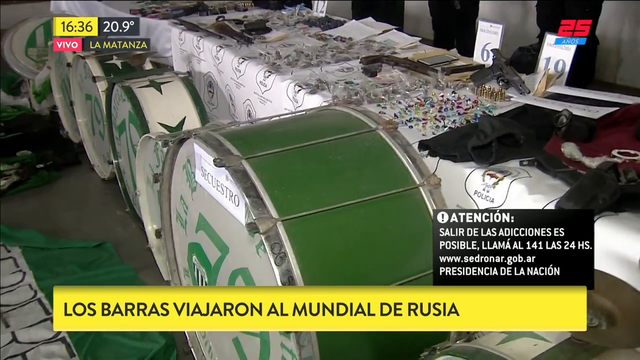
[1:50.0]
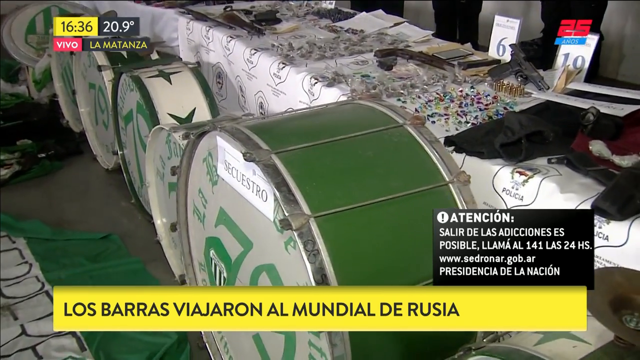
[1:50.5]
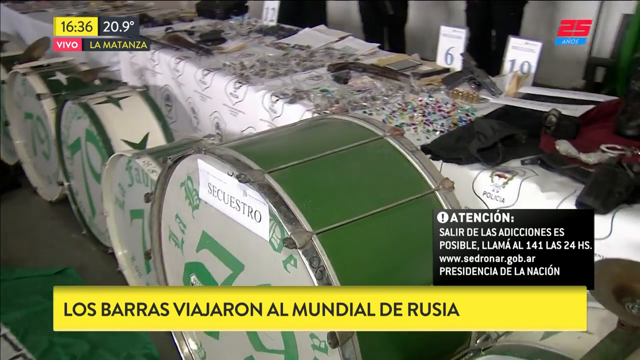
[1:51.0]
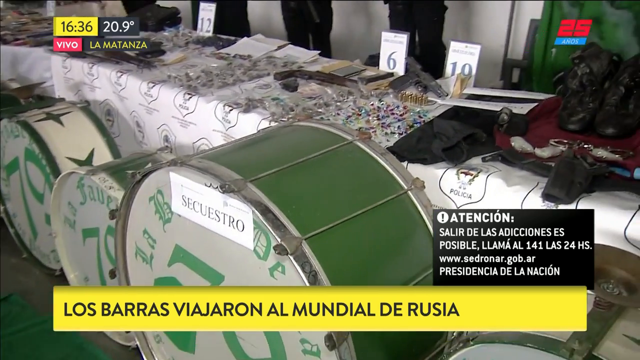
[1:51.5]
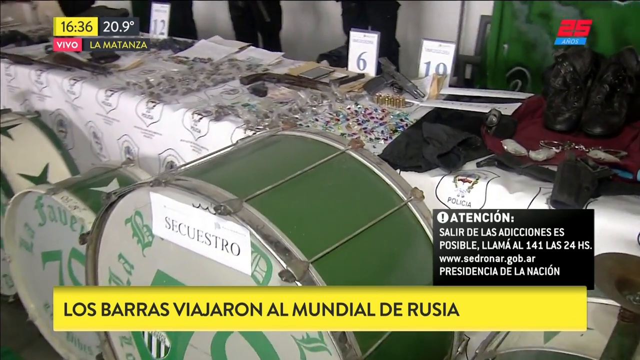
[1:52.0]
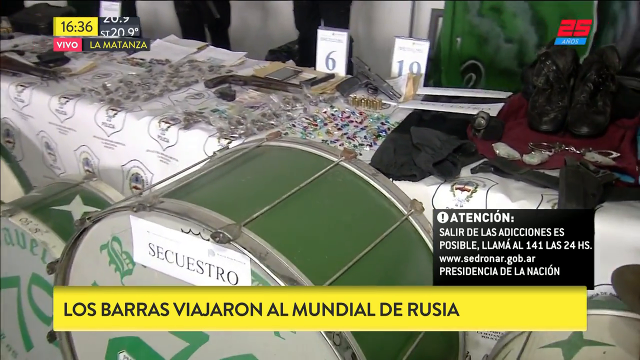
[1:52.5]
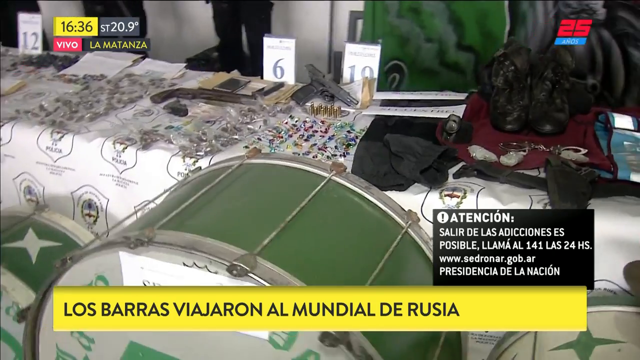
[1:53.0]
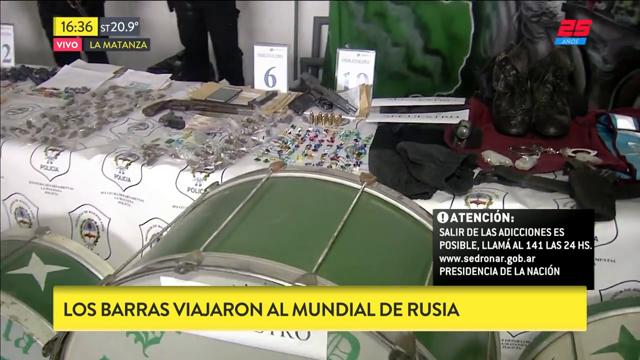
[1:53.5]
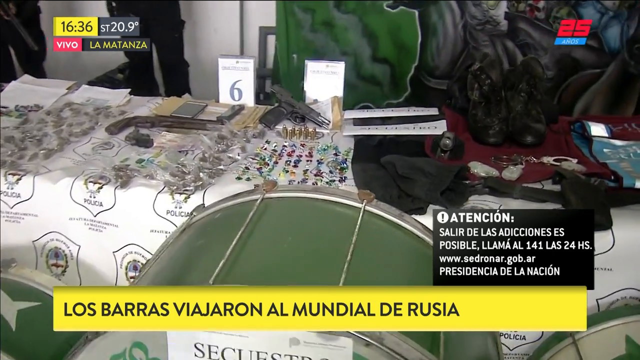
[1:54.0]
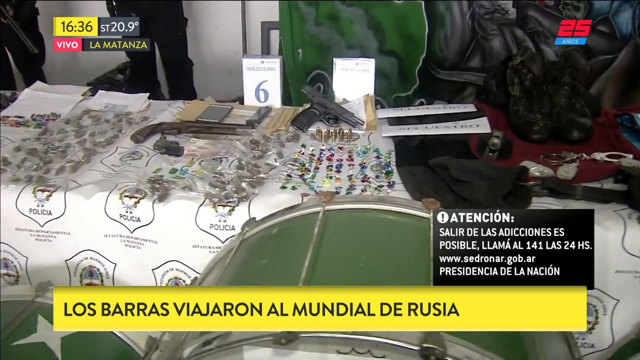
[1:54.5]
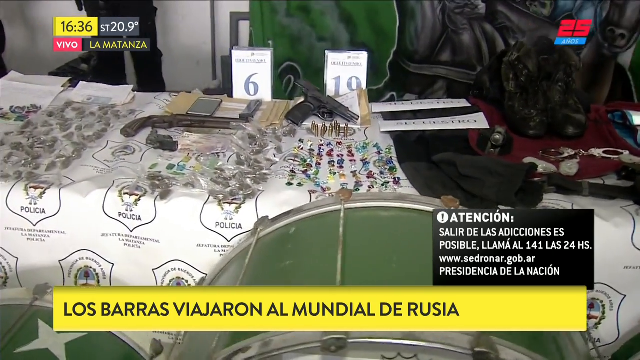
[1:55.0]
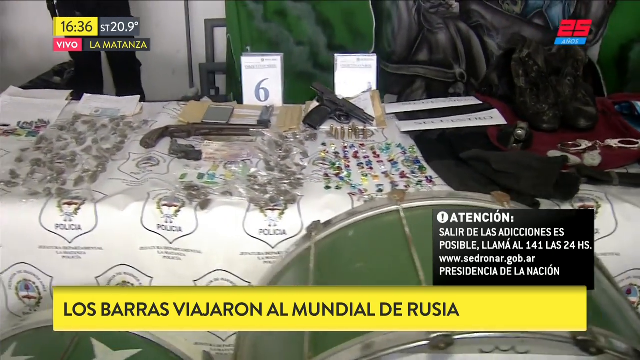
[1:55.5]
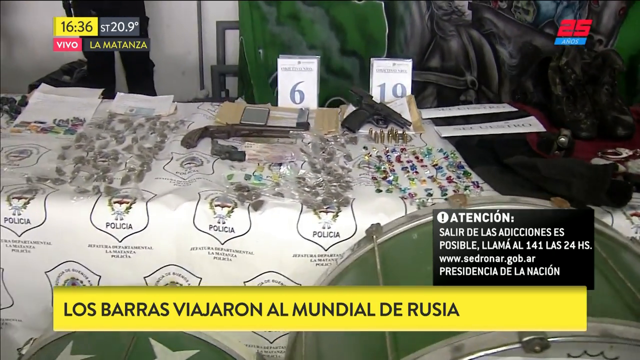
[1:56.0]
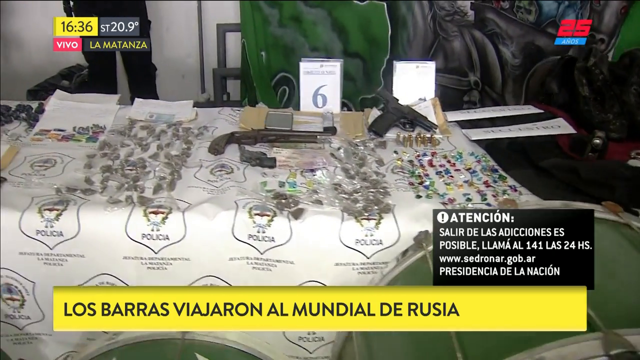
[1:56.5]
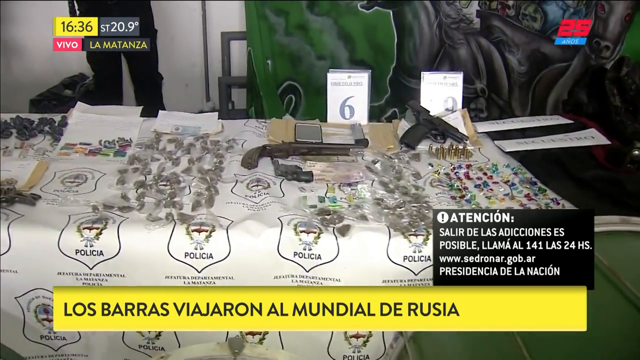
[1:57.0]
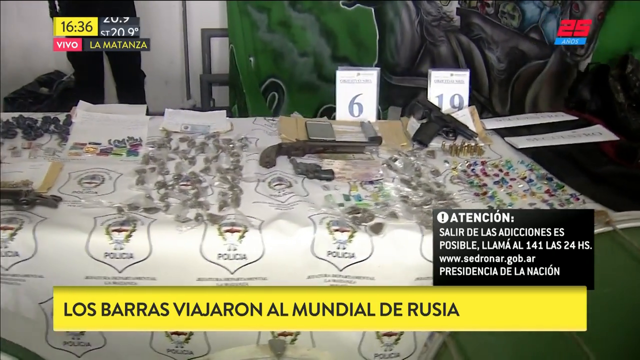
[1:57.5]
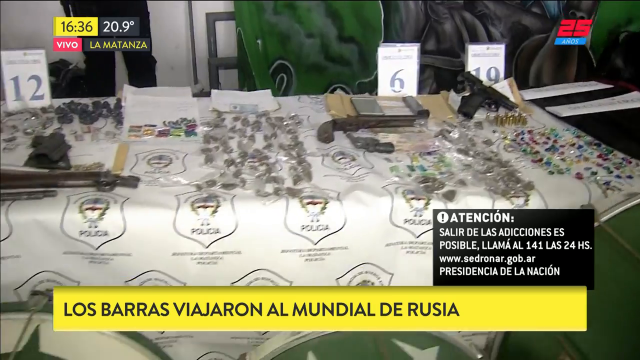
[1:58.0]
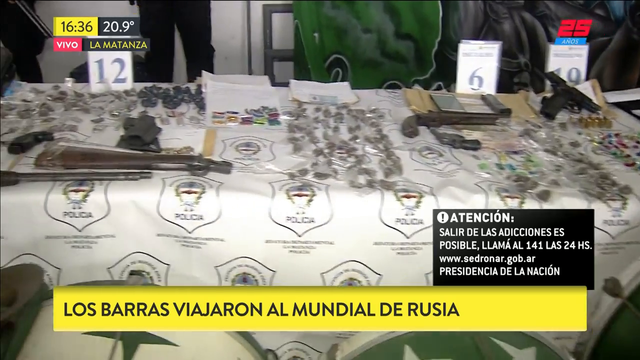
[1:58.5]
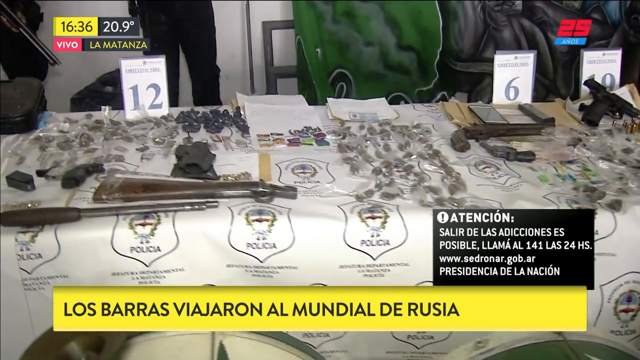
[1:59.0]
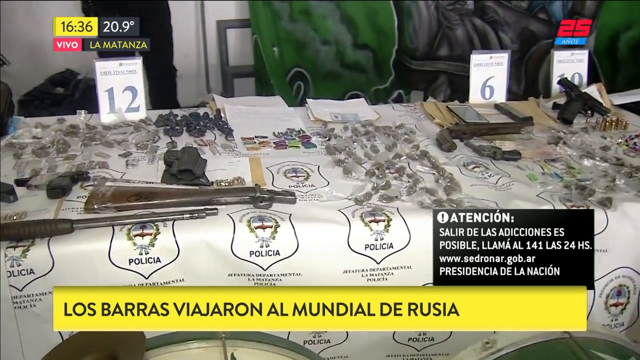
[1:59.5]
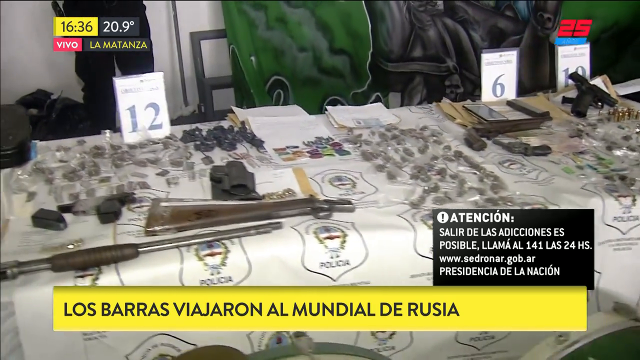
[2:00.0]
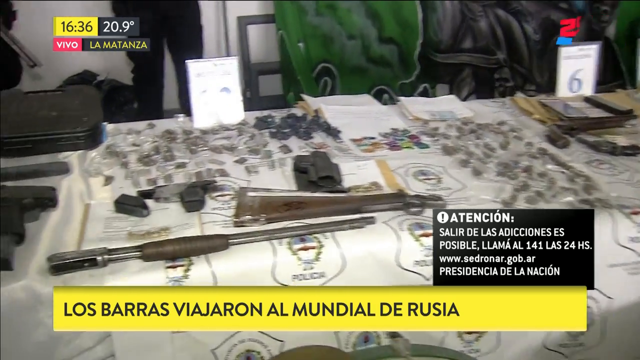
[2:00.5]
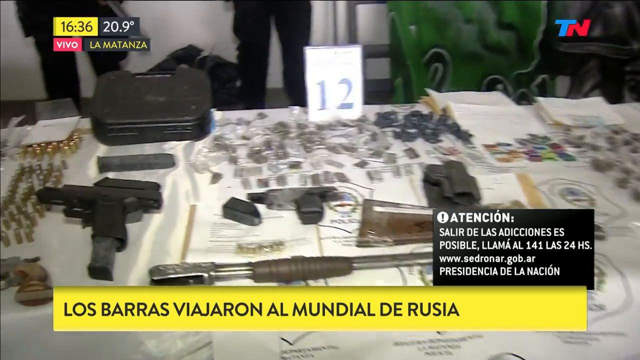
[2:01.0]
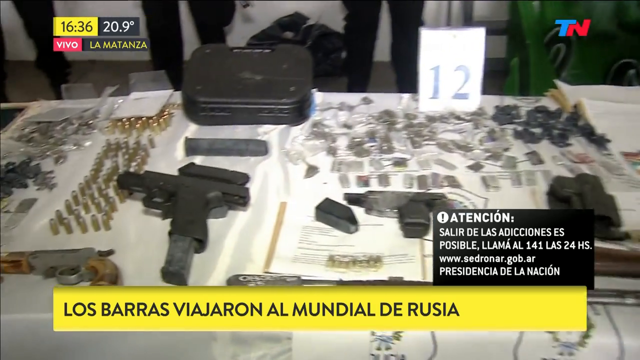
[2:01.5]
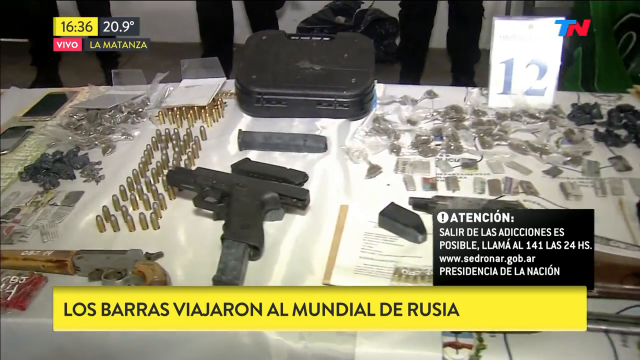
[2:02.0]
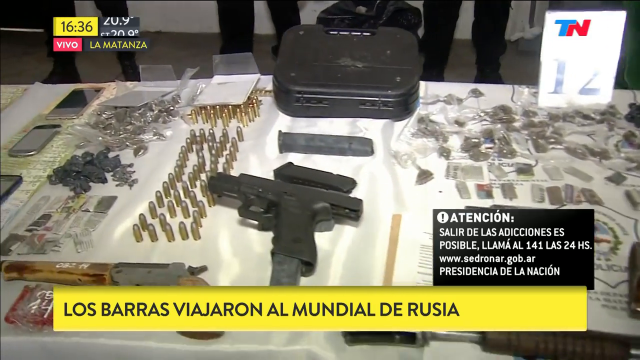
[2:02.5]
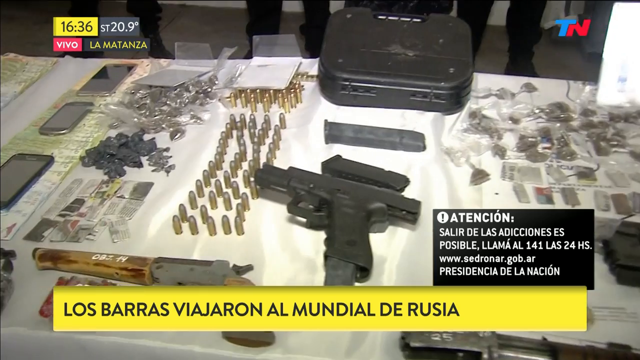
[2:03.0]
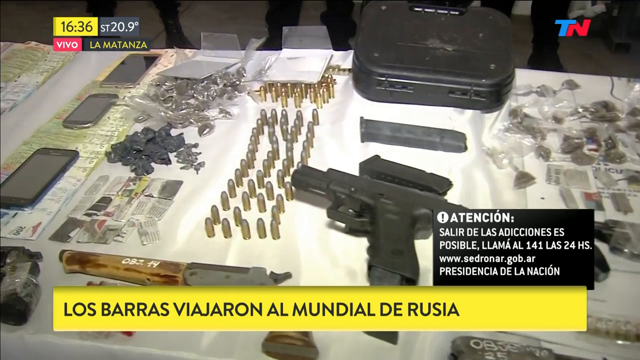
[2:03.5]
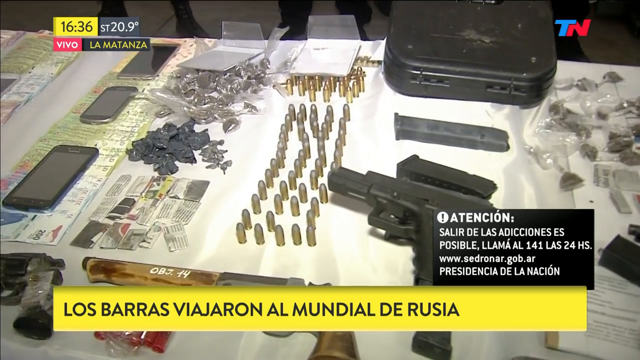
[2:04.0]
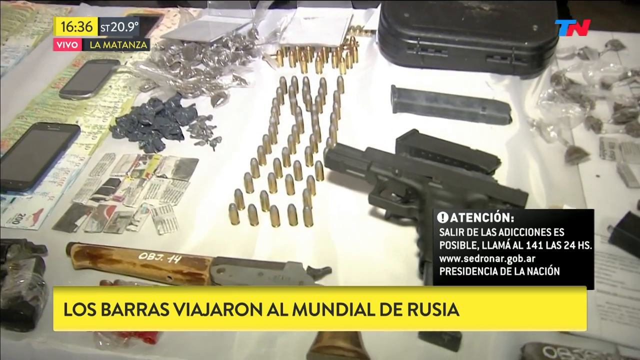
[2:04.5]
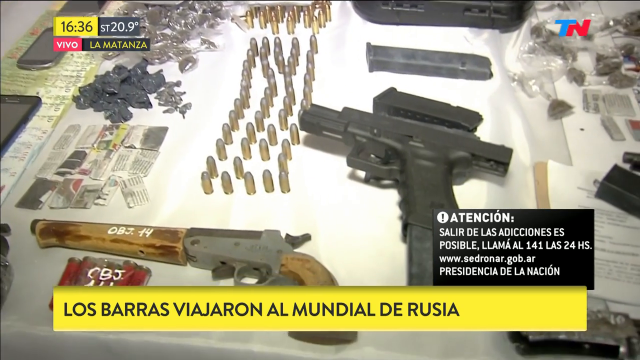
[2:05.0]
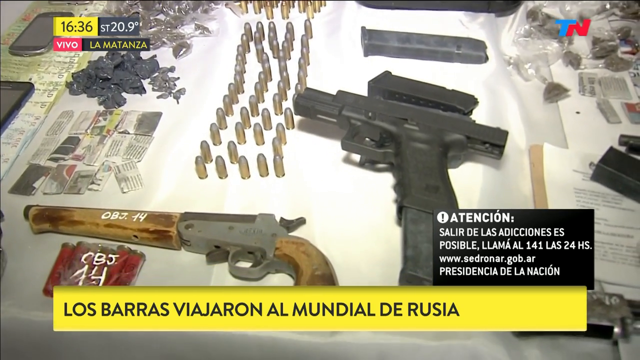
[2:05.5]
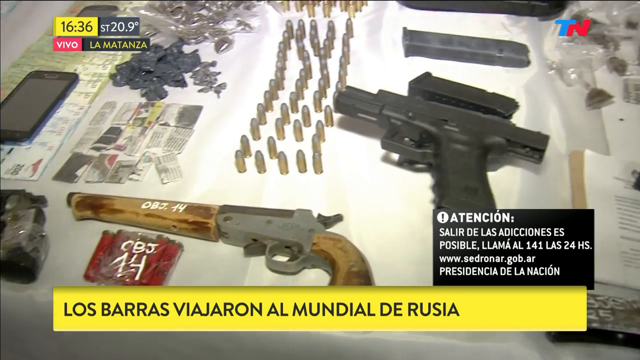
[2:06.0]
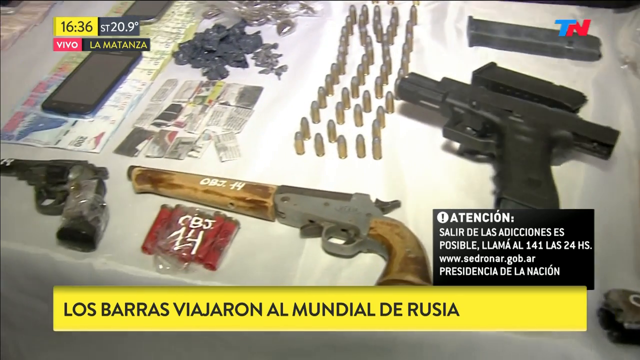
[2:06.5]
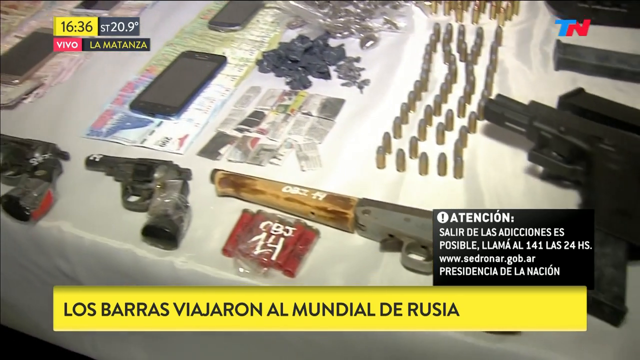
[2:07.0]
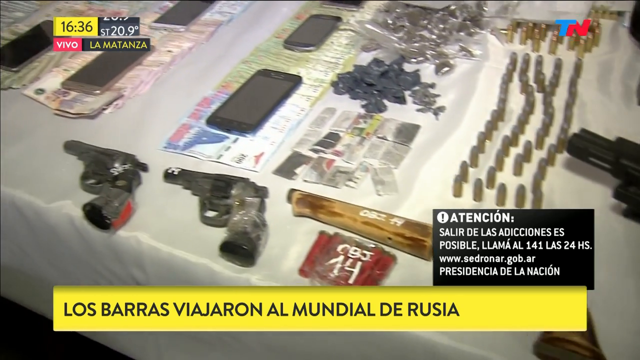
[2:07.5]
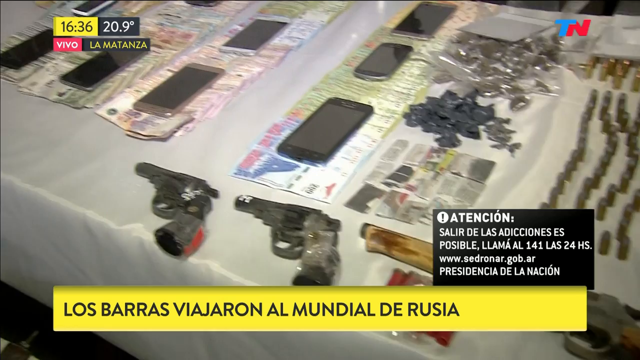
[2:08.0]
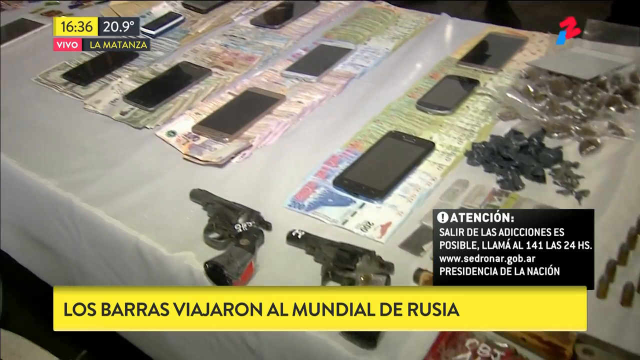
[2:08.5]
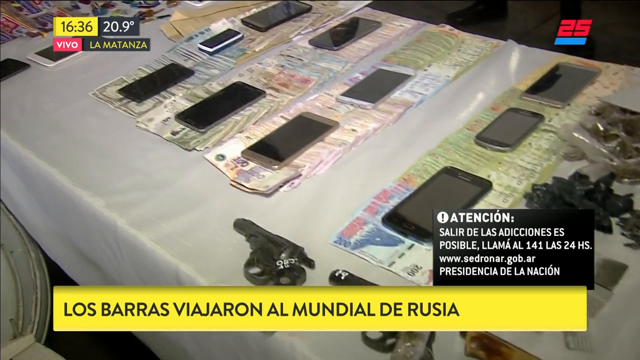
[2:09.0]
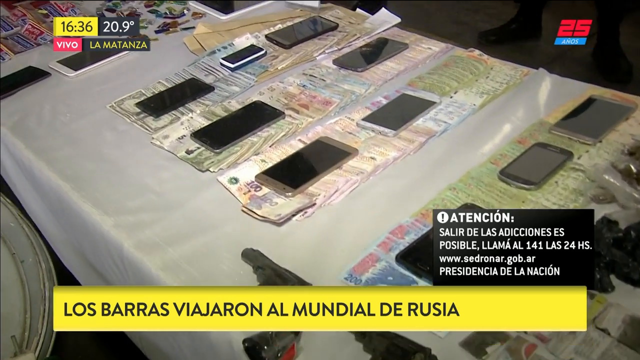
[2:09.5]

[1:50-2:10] The camera moves slowly over the items displayed in rows on the table. There are shiny bullets and a black gun neatly lined up, dagger cases next to them, and phones and pencils next to those. There is also a table of folded white and green sports jerseys, and things that look like jewelry. The yellow banner across the screen shows black text with different wording from before, and just above it is a box with "attention". The temperature appears in bright yellow, and the time is still in the corner, still indicating live coverage.